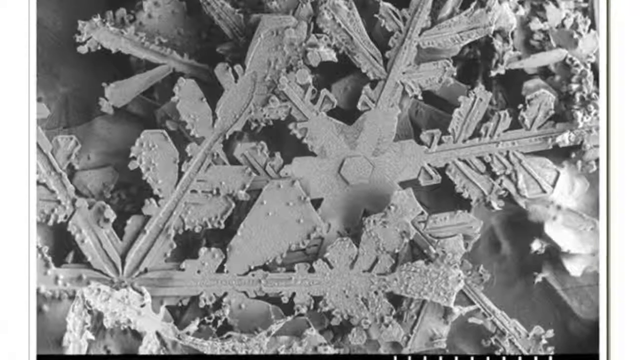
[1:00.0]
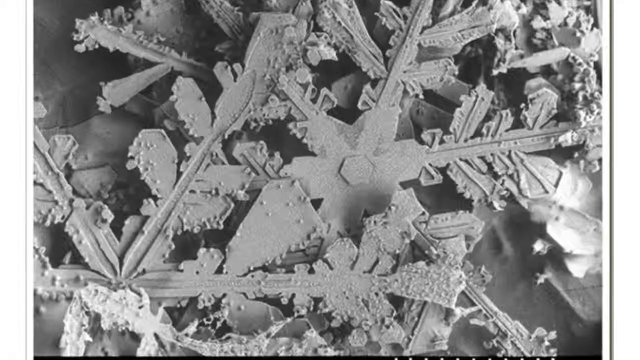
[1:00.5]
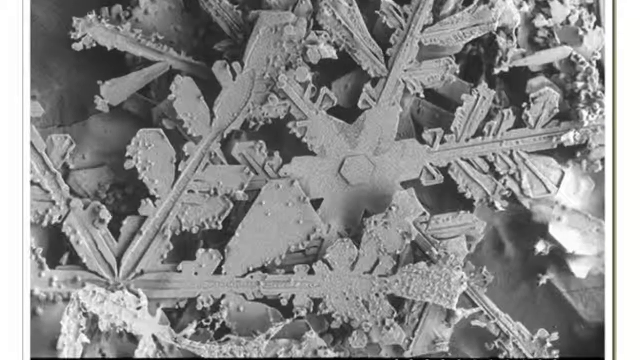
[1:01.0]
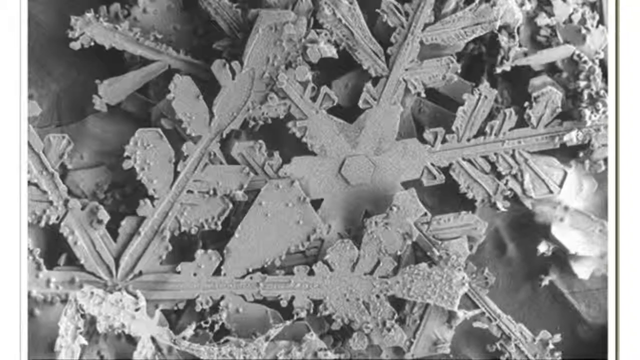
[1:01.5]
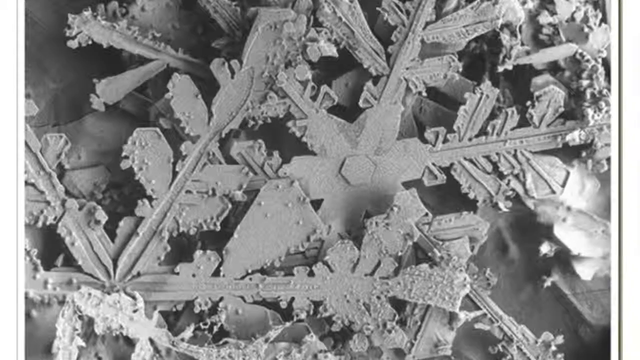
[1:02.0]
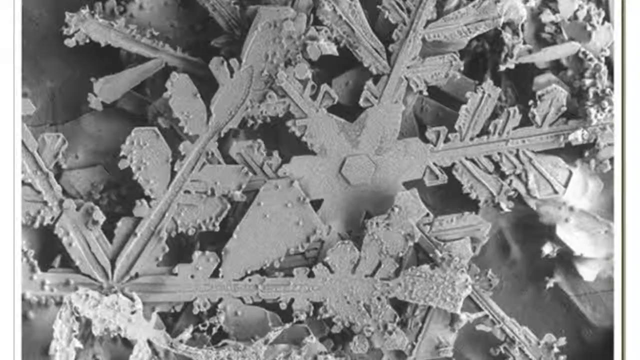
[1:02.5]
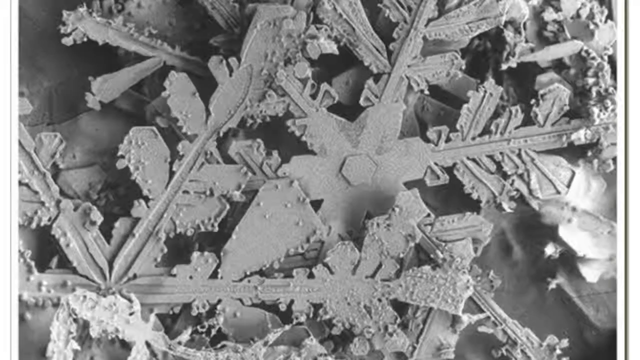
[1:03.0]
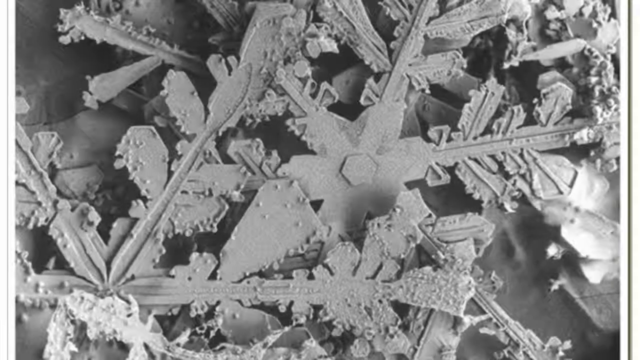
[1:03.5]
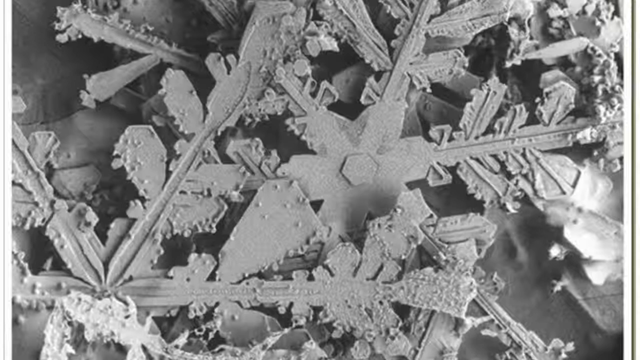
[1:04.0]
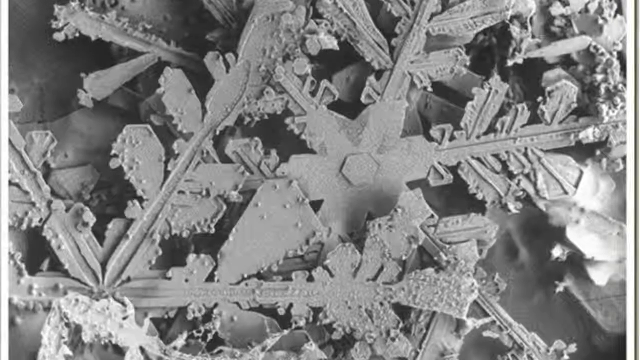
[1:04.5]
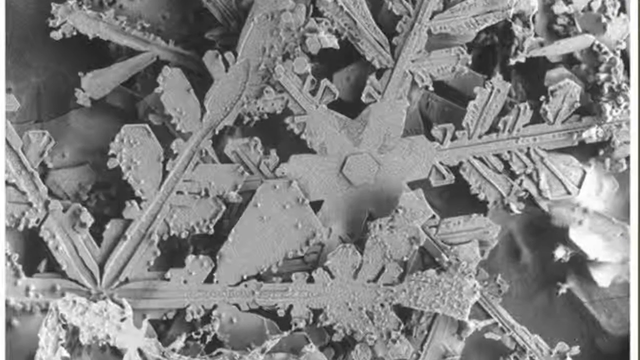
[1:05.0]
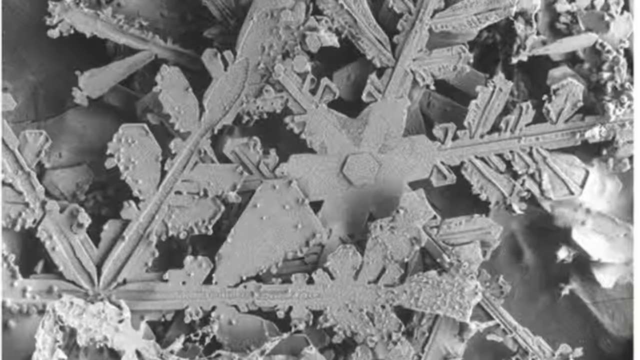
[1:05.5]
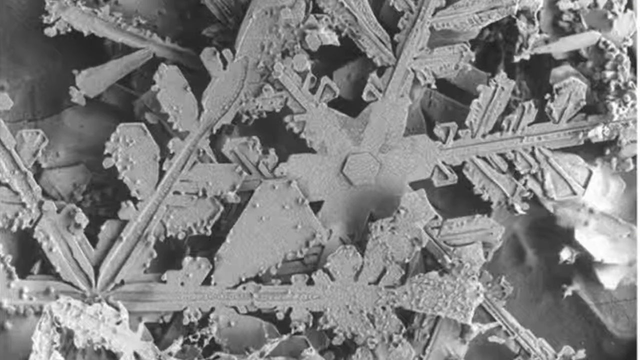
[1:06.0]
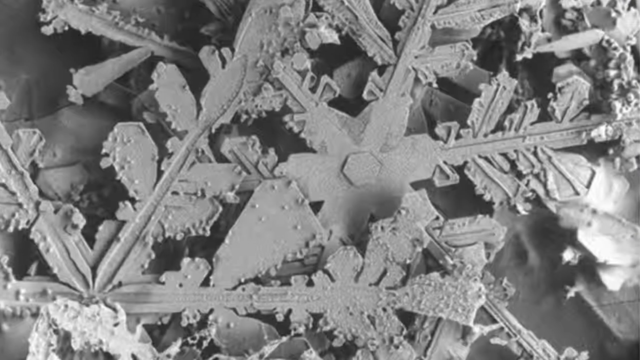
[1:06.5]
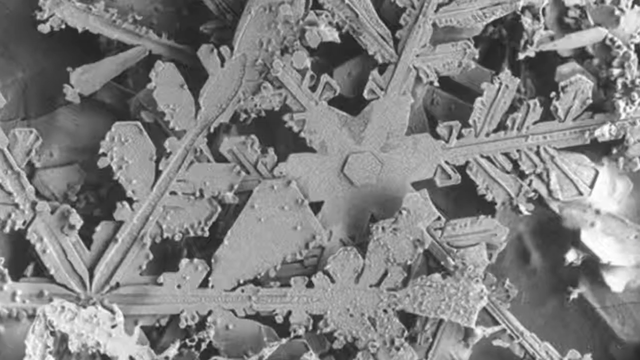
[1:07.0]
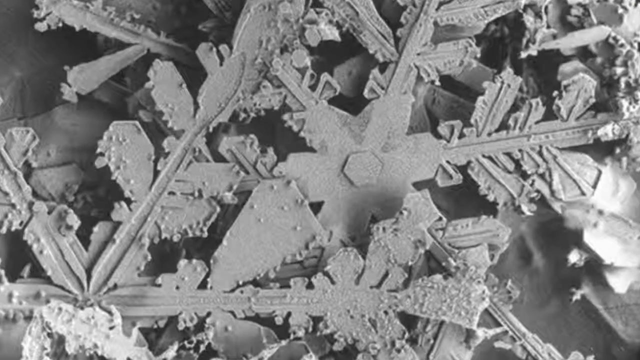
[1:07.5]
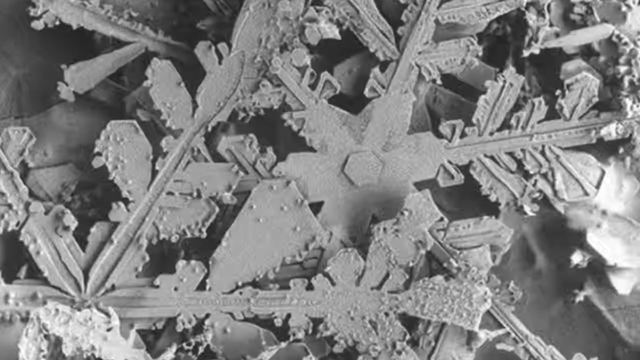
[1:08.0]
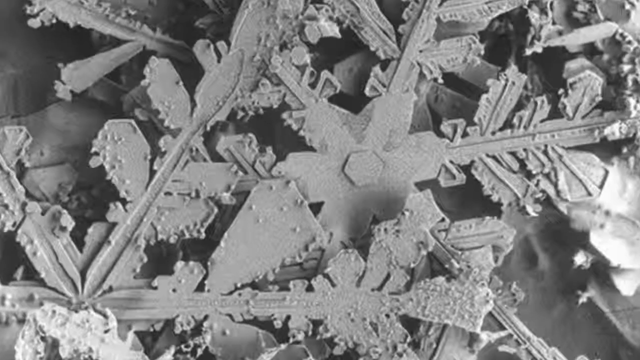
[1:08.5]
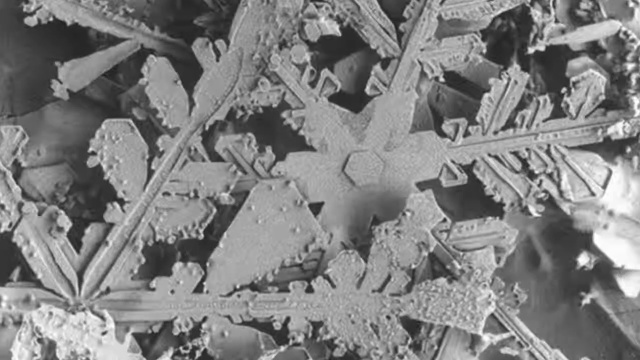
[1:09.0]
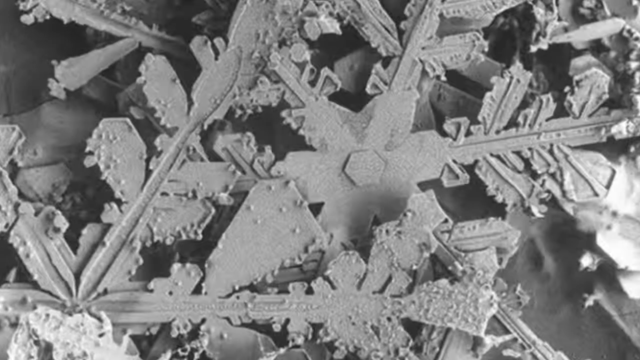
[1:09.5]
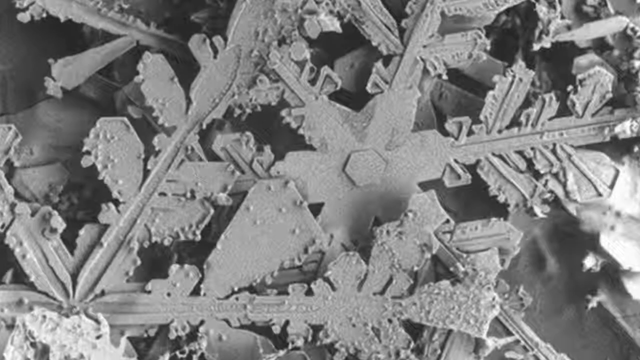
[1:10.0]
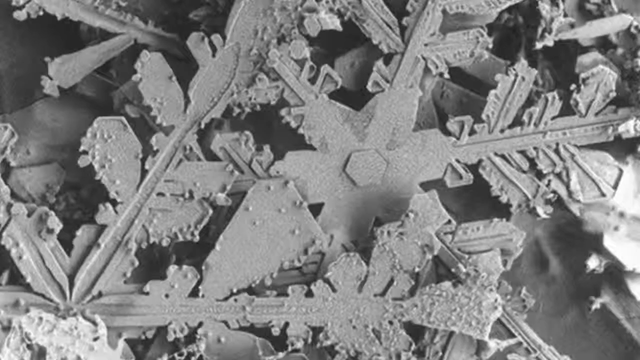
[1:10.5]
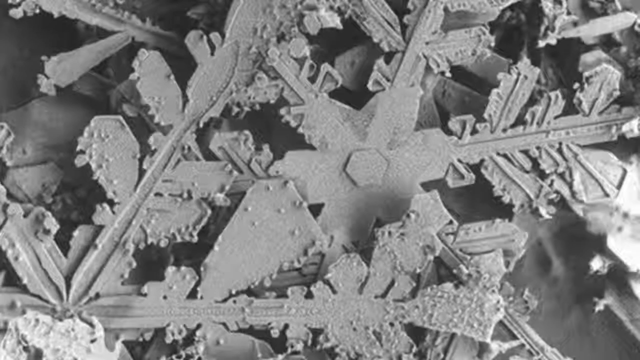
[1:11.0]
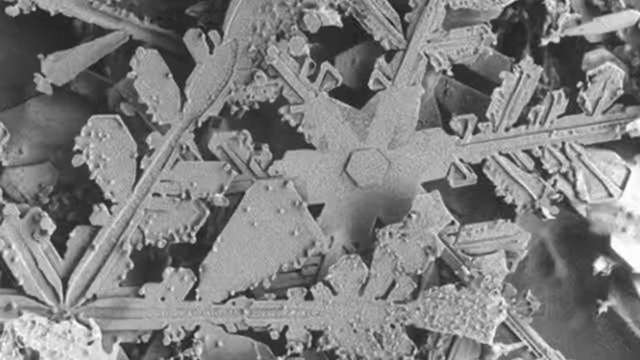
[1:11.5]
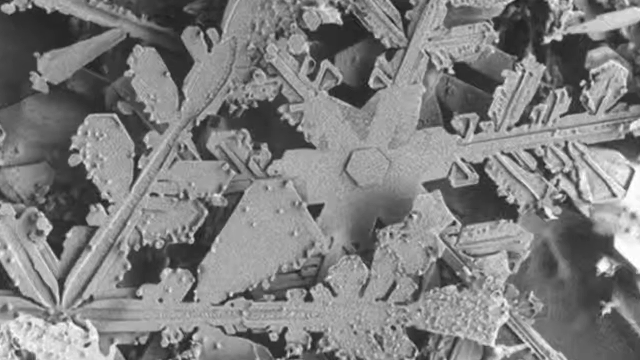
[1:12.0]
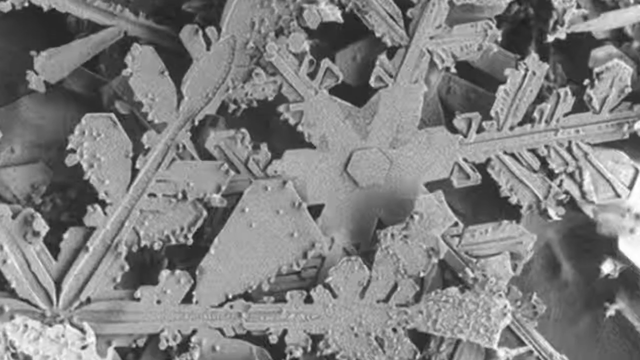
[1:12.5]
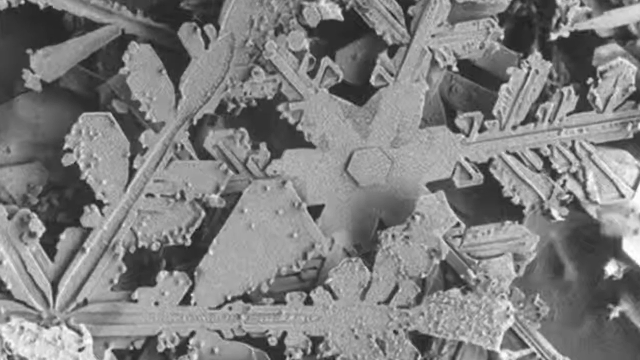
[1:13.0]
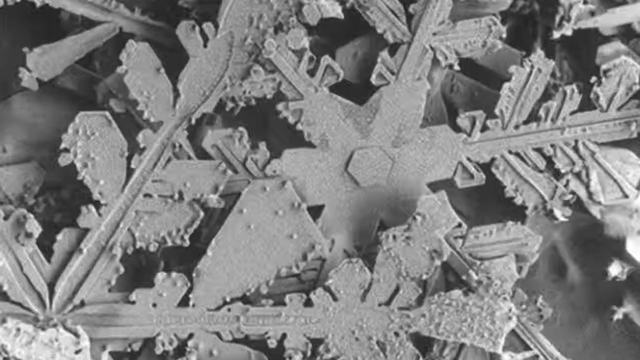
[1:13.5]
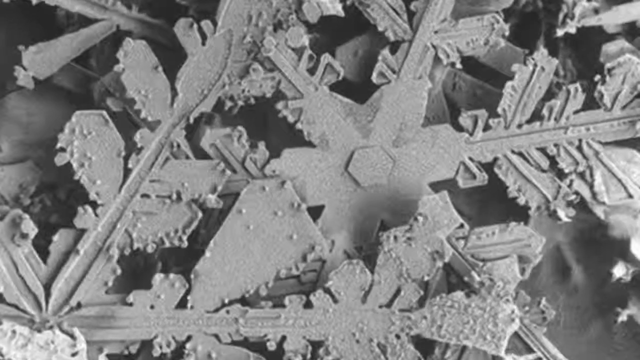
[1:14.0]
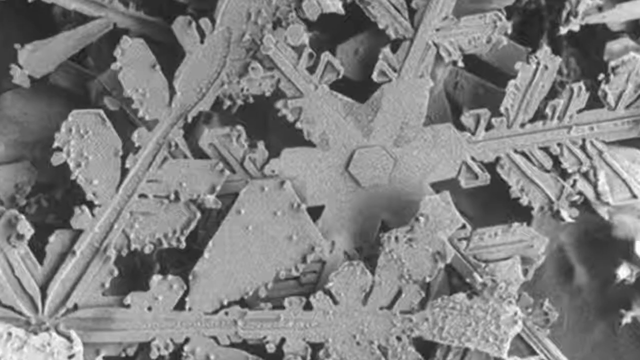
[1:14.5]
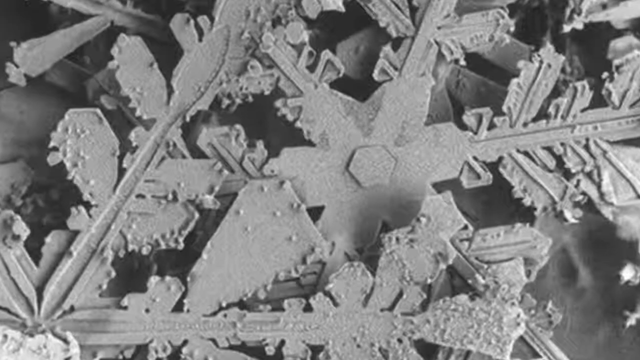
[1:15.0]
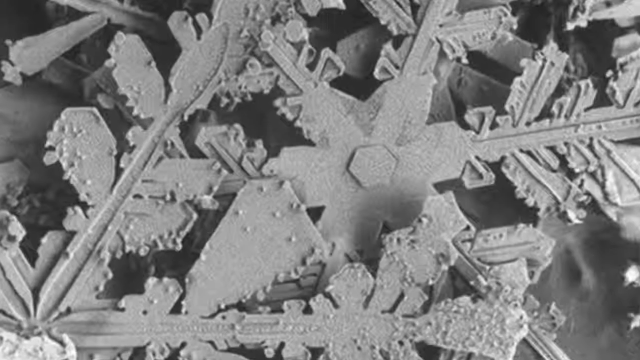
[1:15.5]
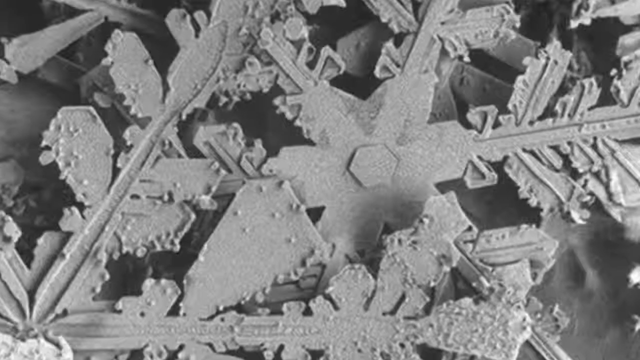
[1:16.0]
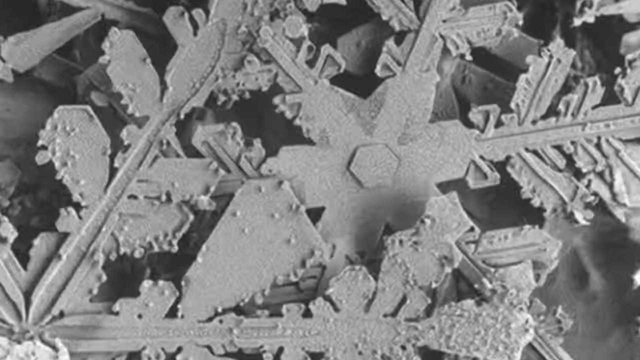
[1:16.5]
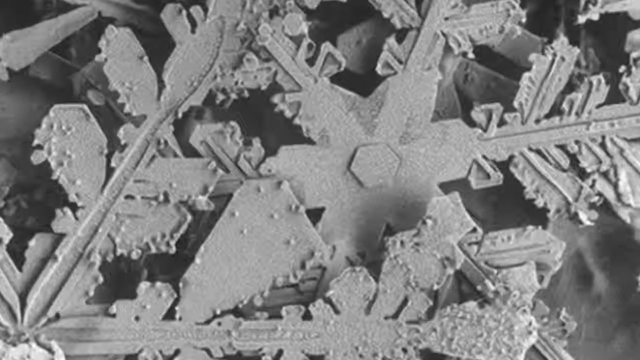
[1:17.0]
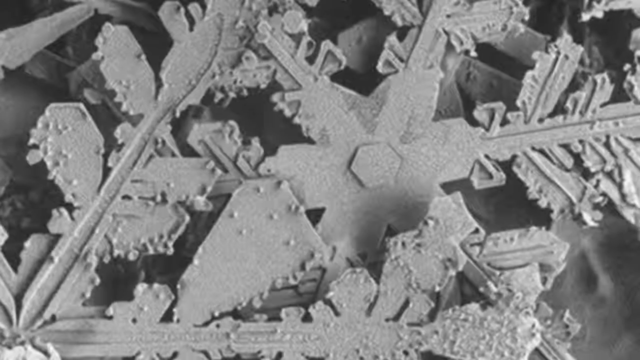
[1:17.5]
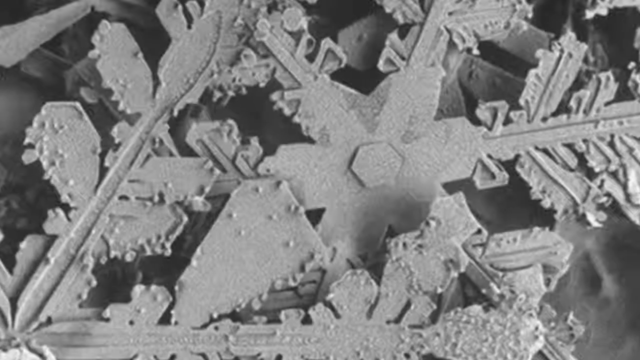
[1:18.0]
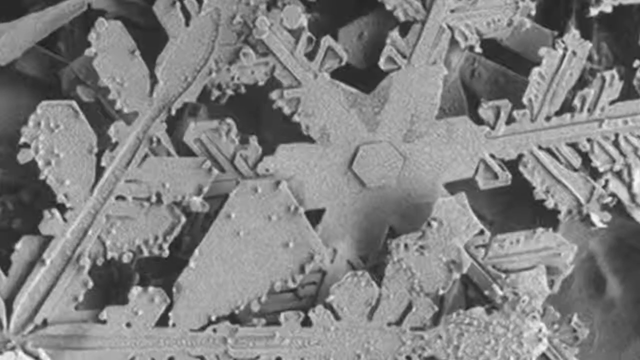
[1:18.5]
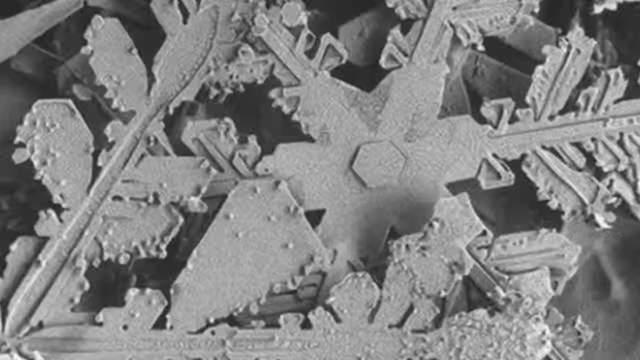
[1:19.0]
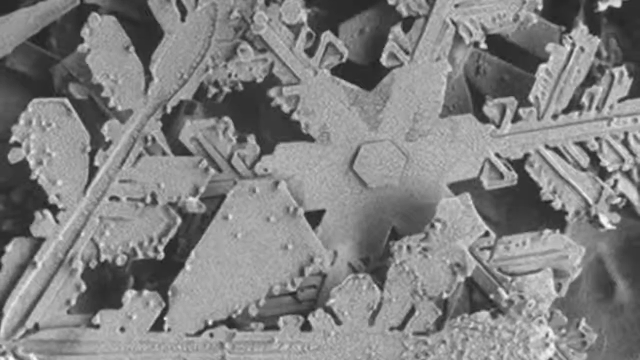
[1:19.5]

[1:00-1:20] The video moves on to common snowflake types, listing each type with its temperature and humidity conditions. The first type is simple prisms, which appear in all temperature conditions. The second type is plates, which appear at temperatures between 25 and 32 degrees and below 15 degrees, with low to medium humidity.